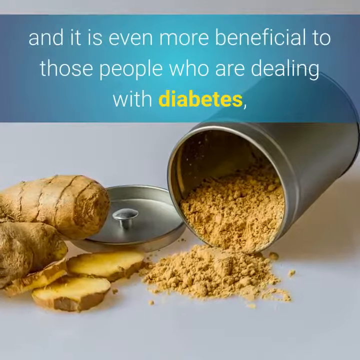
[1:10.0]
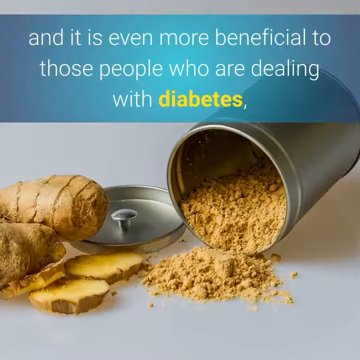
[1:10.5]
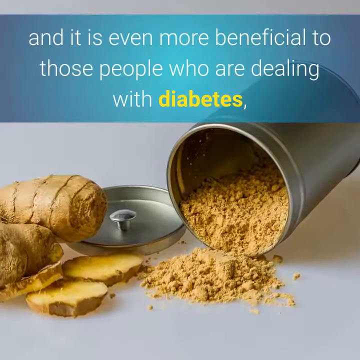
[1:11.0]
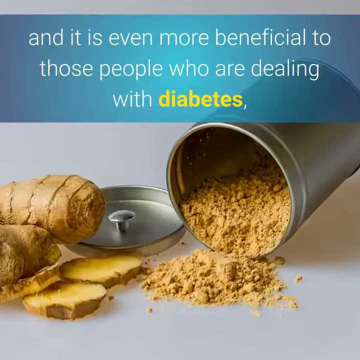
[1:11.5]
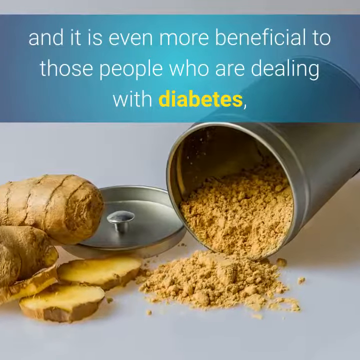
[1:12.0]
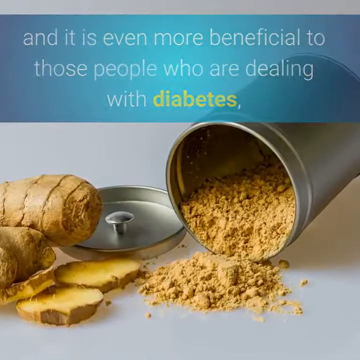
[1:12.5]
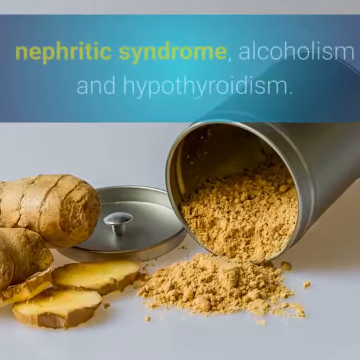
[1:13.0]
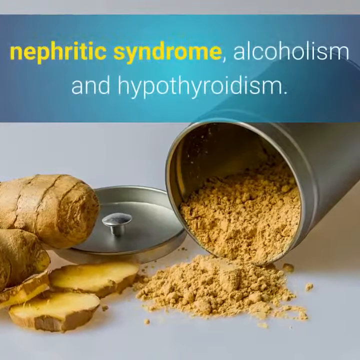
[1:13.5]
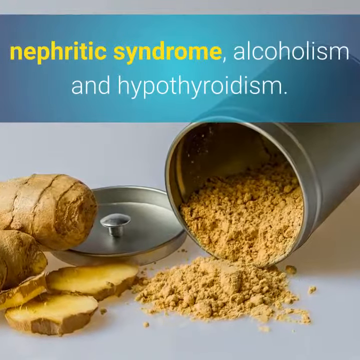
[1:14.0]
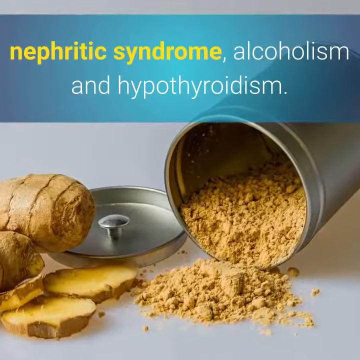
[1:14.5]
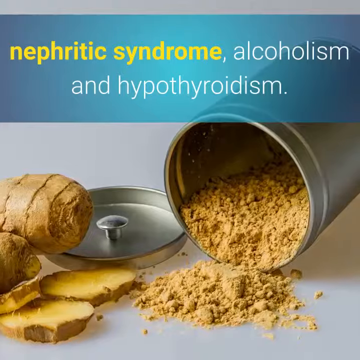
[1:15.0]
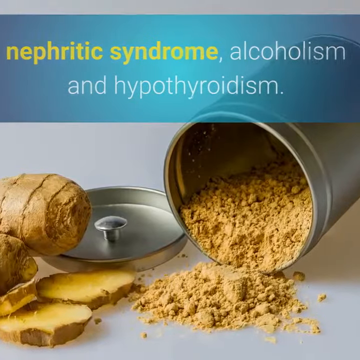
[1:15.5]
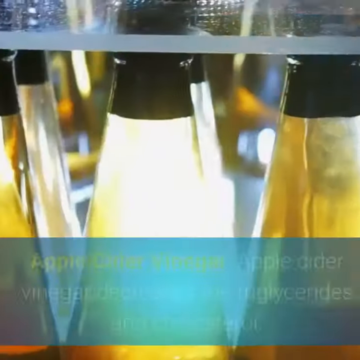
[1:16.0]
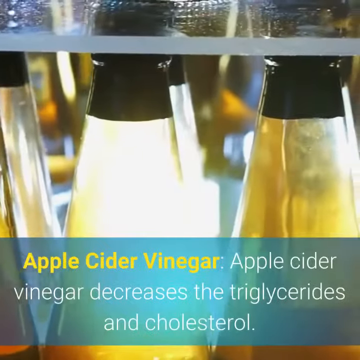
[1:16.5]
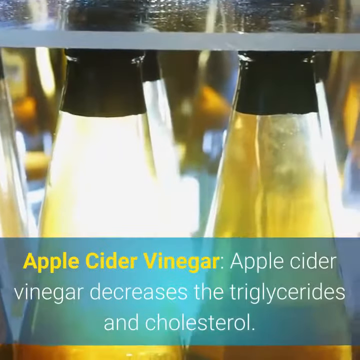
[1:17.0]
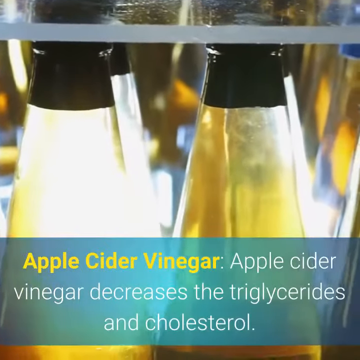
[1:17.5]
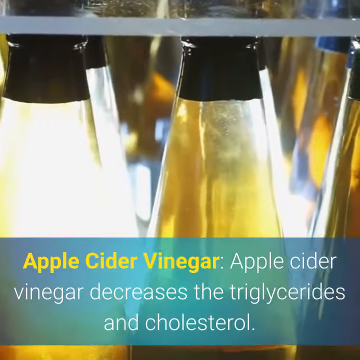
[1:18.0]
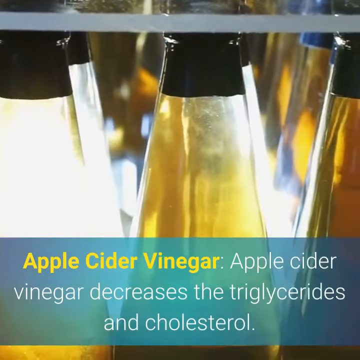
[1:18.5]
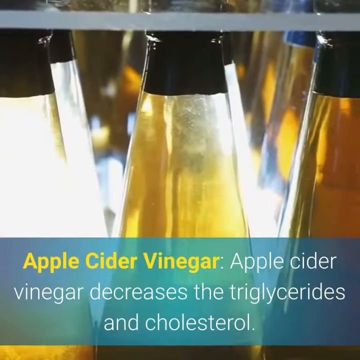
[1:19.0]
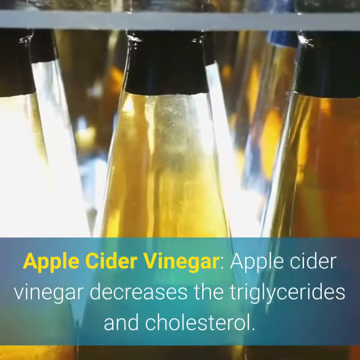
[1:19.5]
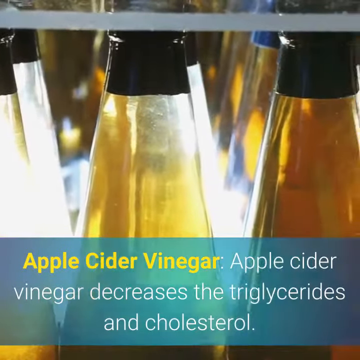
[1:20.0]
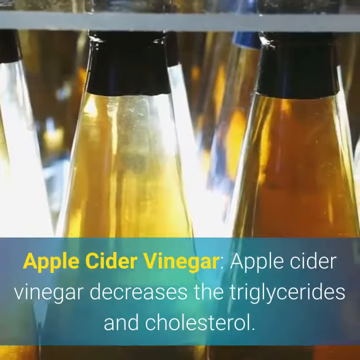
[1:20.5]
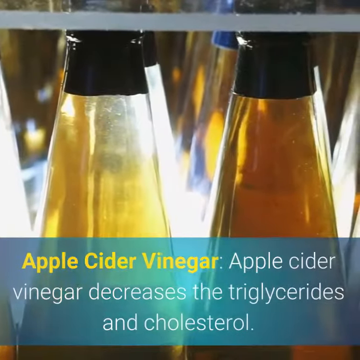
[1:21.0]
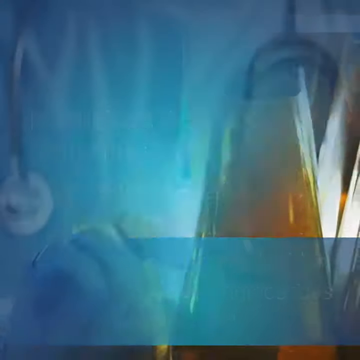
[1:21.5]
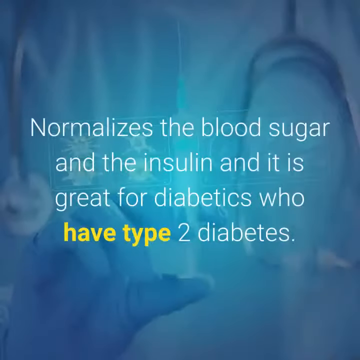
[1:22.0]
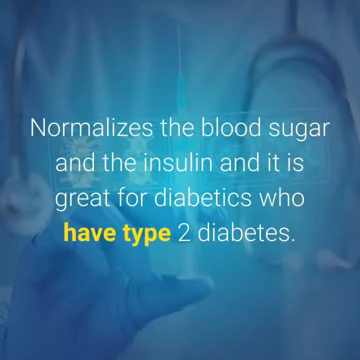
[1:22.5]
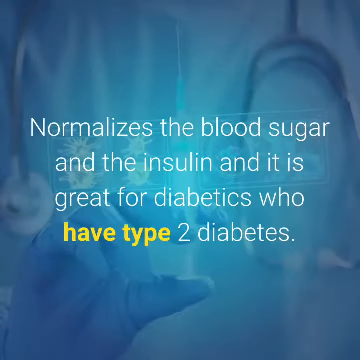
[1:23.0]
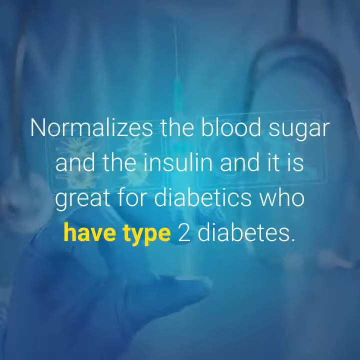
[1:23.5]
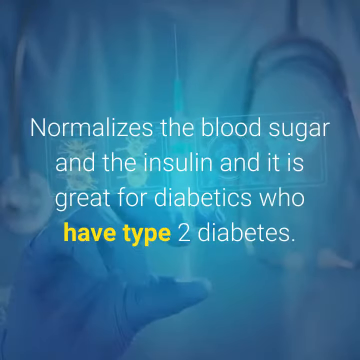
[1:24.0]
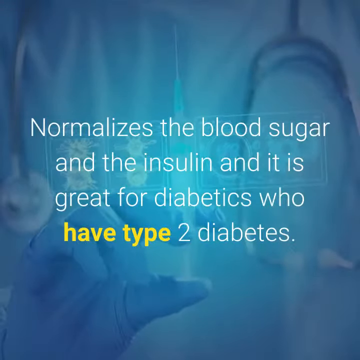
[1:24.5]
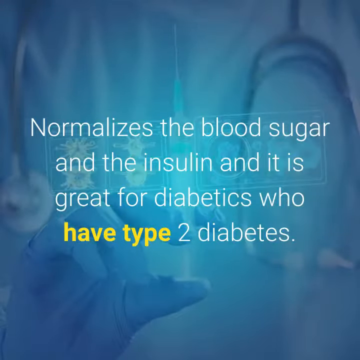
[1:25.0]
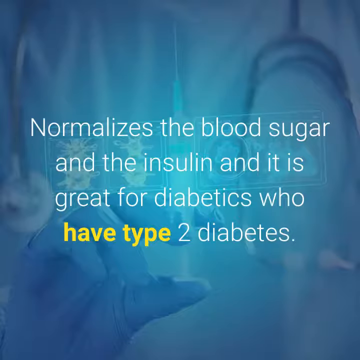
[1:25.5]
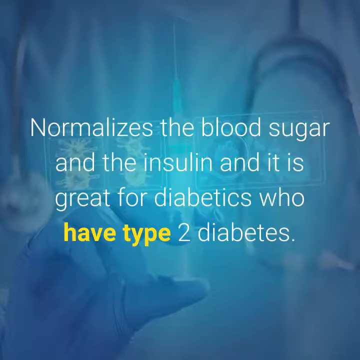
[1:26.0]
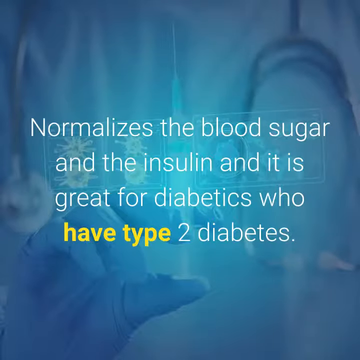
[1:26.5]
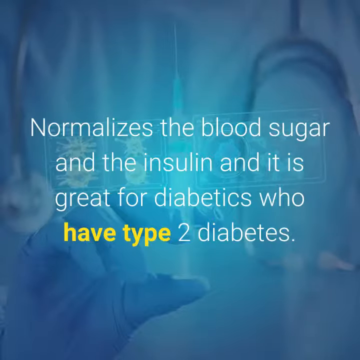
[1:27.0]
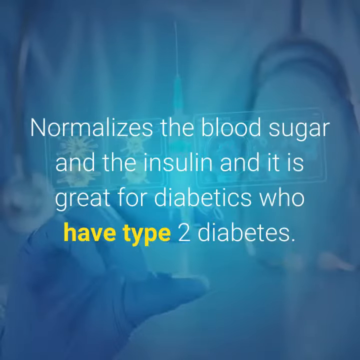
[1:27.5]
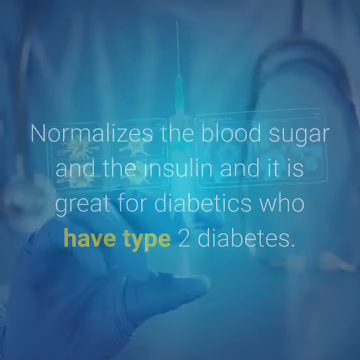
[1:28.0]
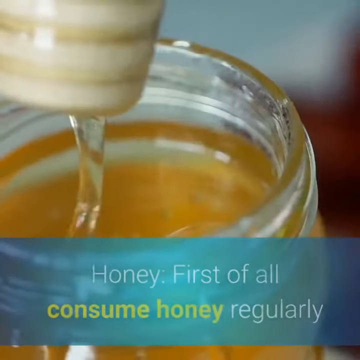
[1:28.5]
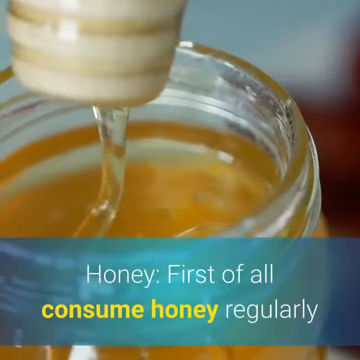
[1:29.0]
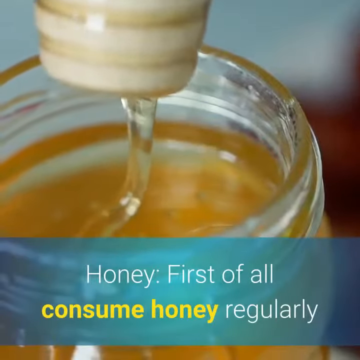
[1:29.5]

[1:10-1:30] A container of what looks like ginger is spilled out on the ground, with a banner in white and yellow text reading "and it is even more beneficial to those people who are dealing with diabetes." The camera moves somewhat into the container, and another blue banner with yellow and white text reads "nephritic syndrome, alcoholism, and hypothyroidism." A blue banner with white and yellow text then reads "apple cider vinegar. Apple cider vinegar decreases the triglycerides and cholesterol." Next comes a blue background with a person holding a needle in the background, who kind of looks like a doctor, and white and yellow text reads "normalizes the blood sugar and the insulin. And it is great for diabetics who have type 2 diabetes." A bunch of bacteria seem to move in the background. The video then transitions to honey, with a banner in white and yellow text reading "honey. First of all, consume honey regularly."